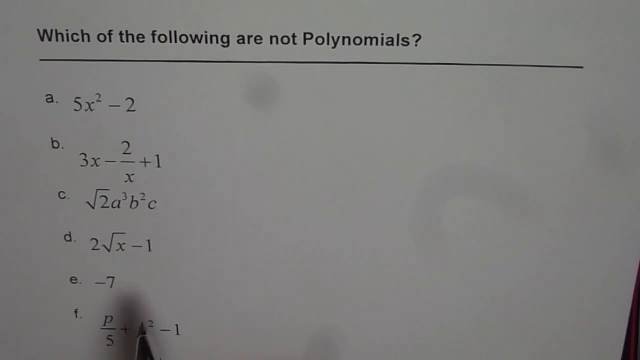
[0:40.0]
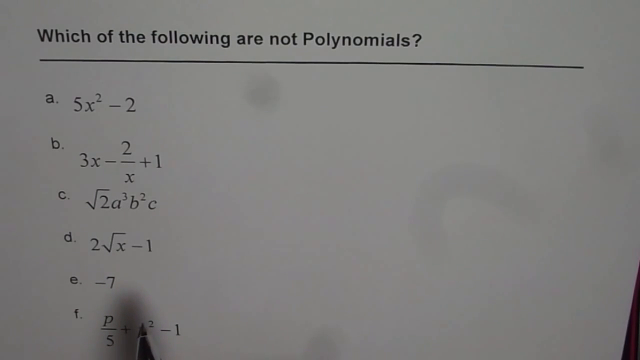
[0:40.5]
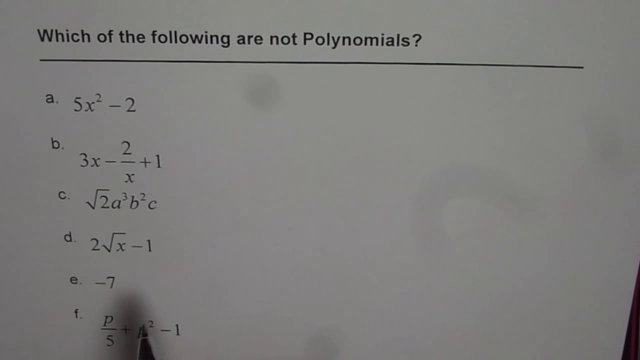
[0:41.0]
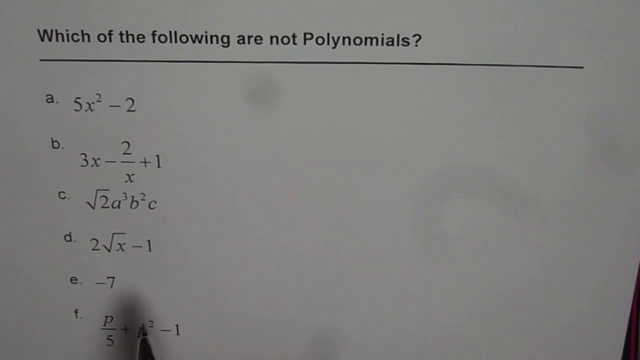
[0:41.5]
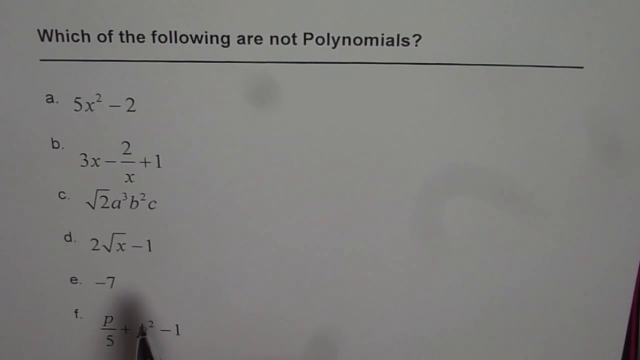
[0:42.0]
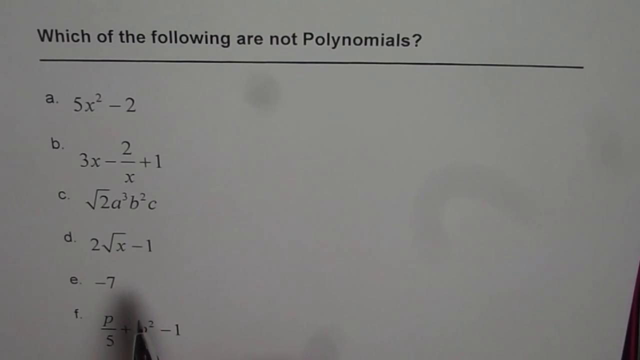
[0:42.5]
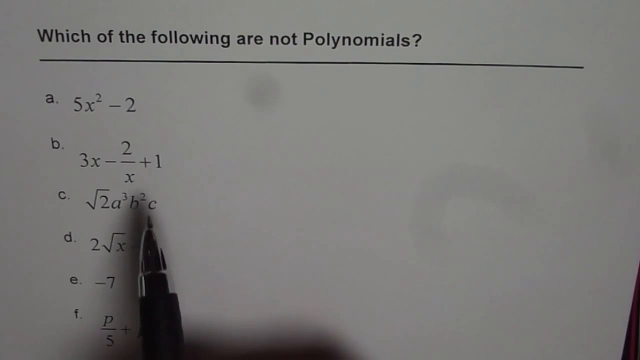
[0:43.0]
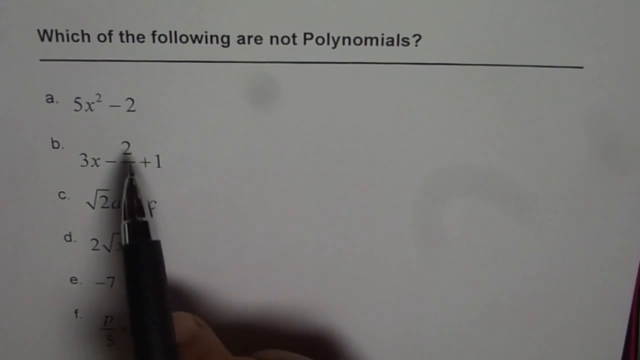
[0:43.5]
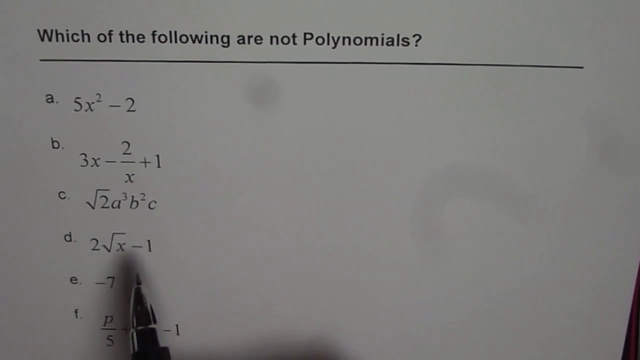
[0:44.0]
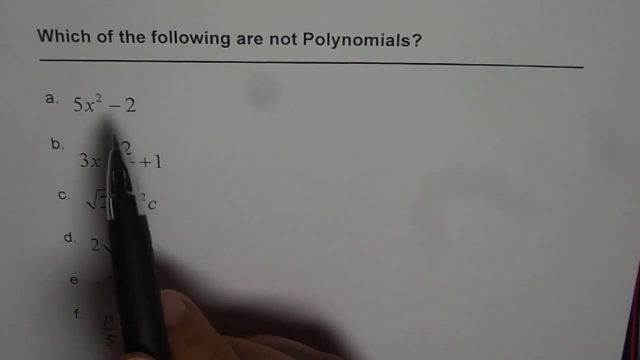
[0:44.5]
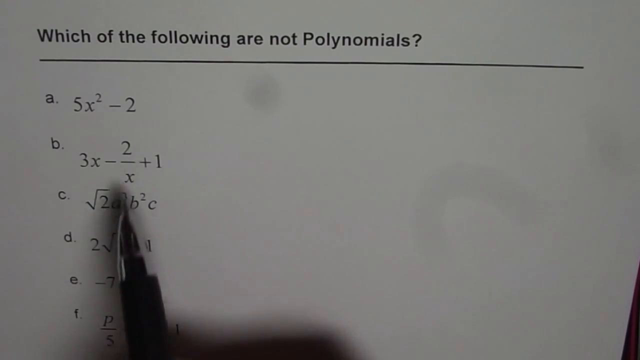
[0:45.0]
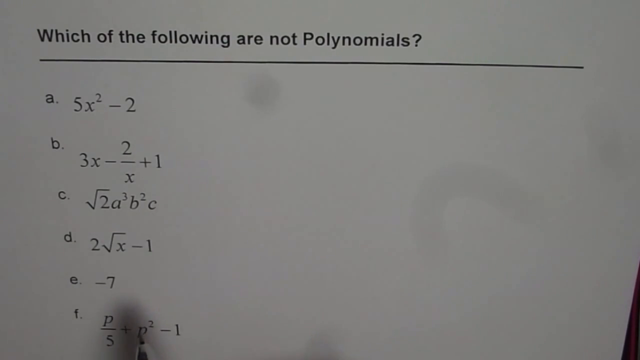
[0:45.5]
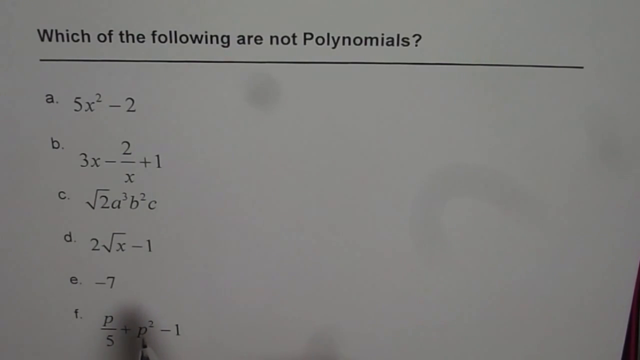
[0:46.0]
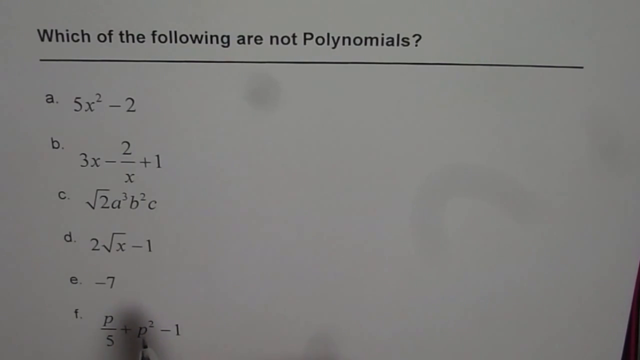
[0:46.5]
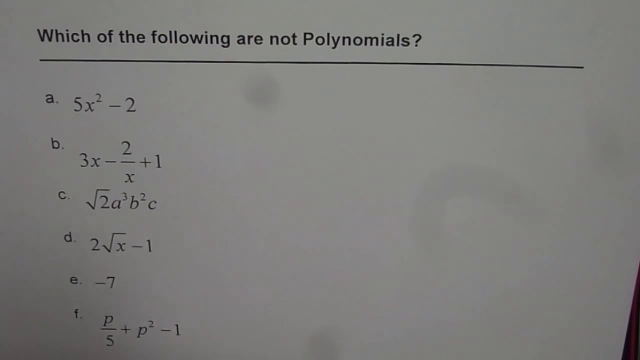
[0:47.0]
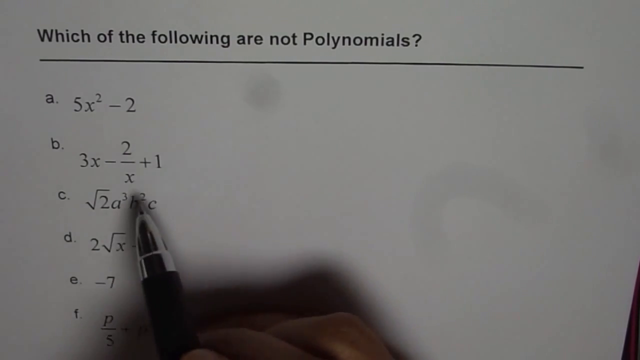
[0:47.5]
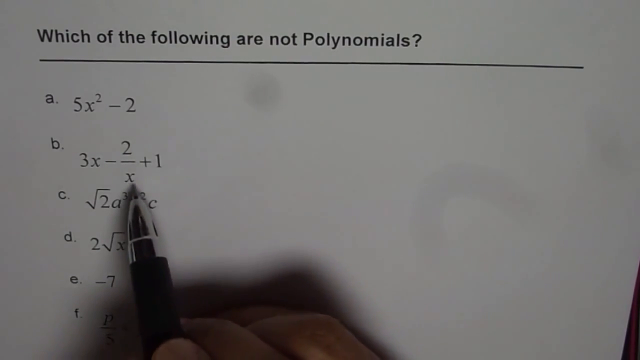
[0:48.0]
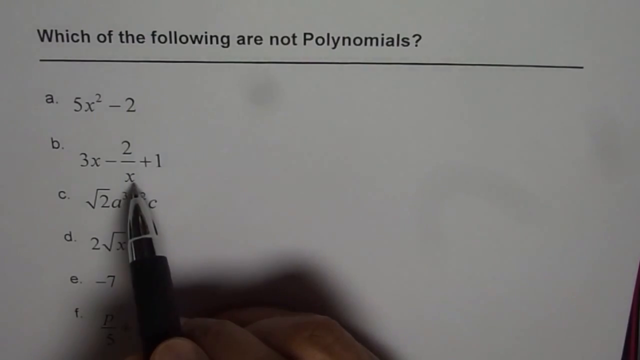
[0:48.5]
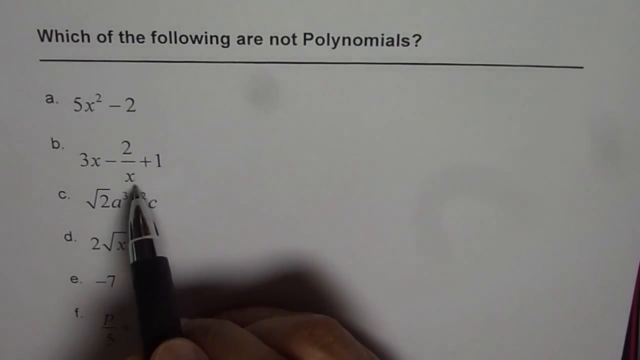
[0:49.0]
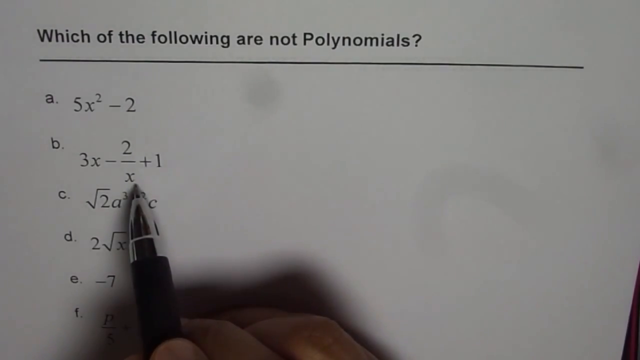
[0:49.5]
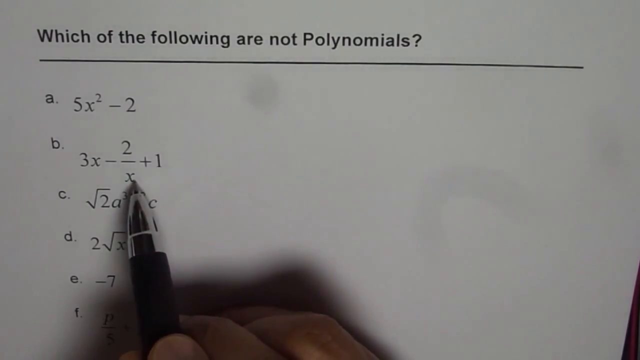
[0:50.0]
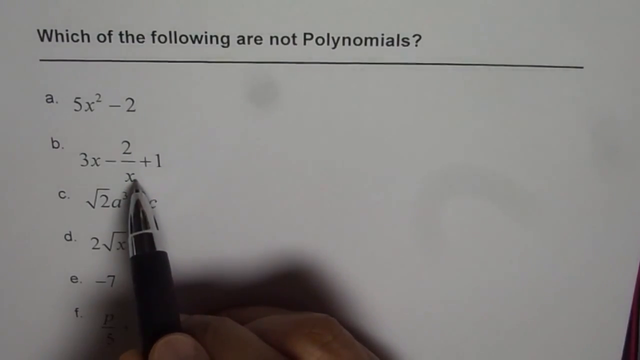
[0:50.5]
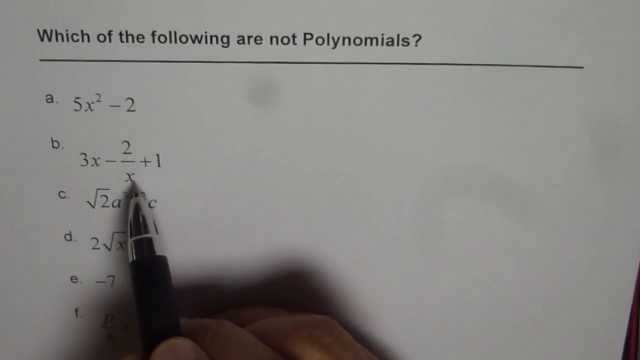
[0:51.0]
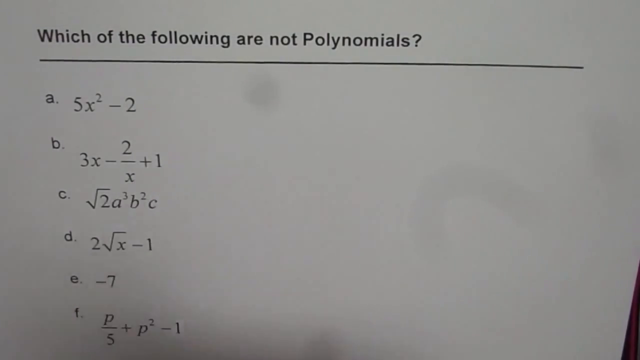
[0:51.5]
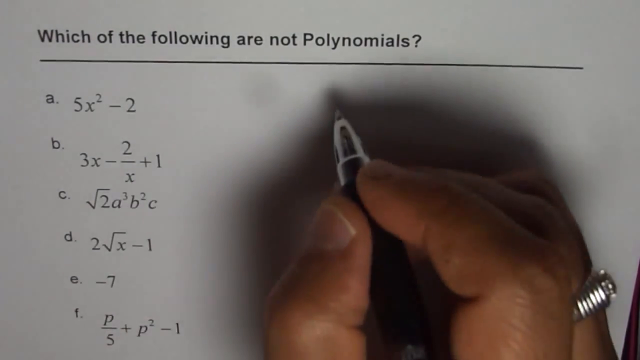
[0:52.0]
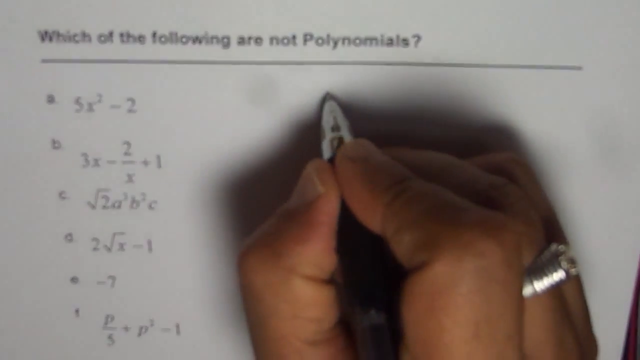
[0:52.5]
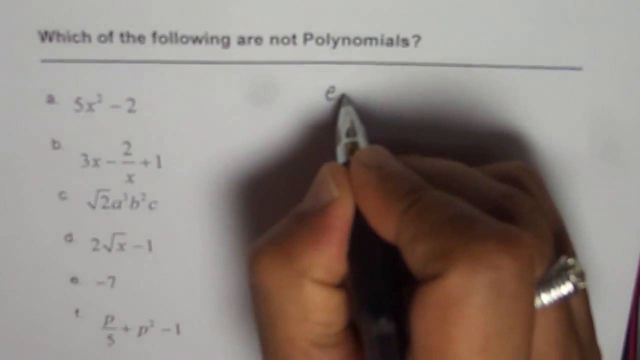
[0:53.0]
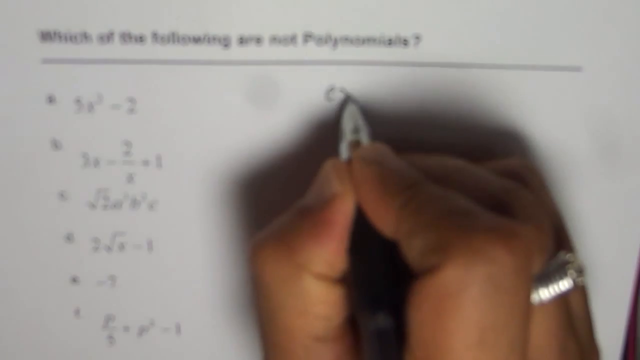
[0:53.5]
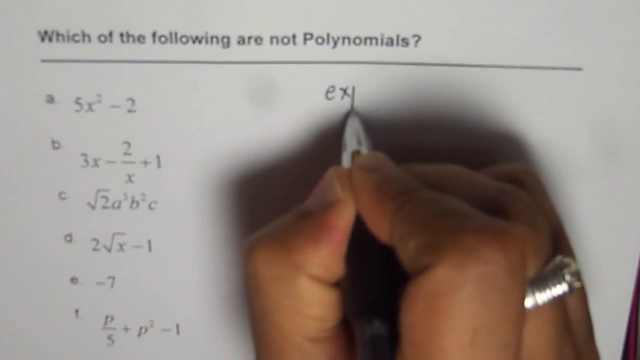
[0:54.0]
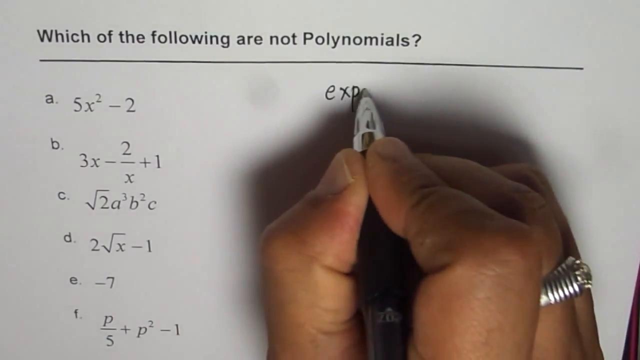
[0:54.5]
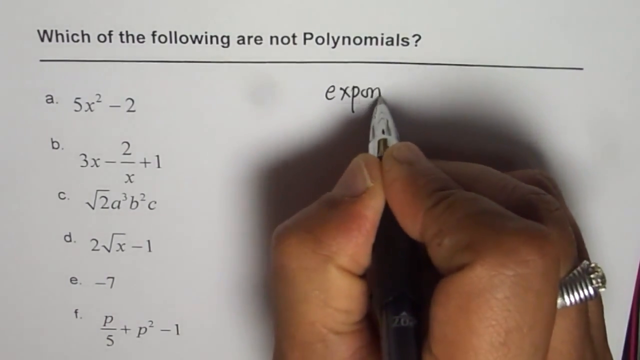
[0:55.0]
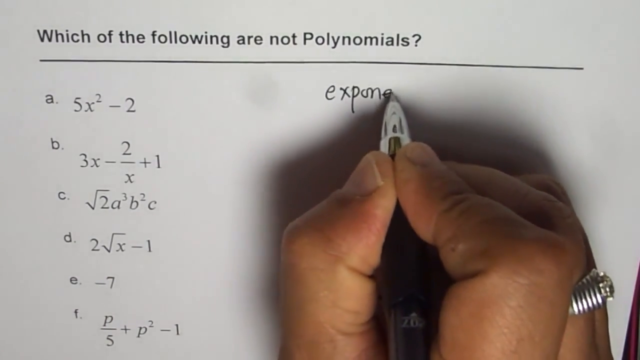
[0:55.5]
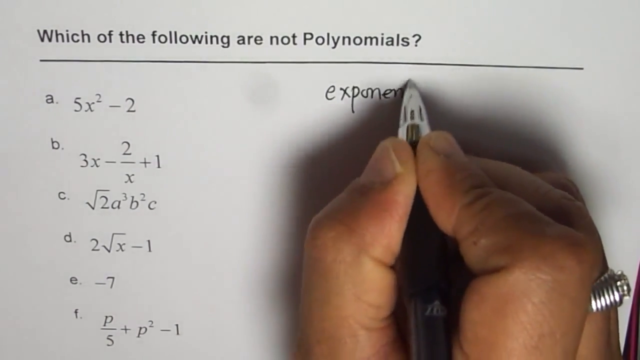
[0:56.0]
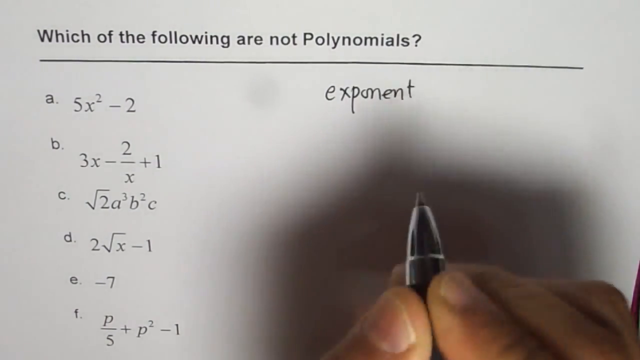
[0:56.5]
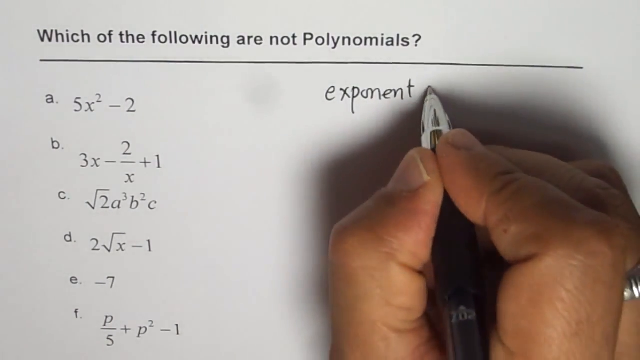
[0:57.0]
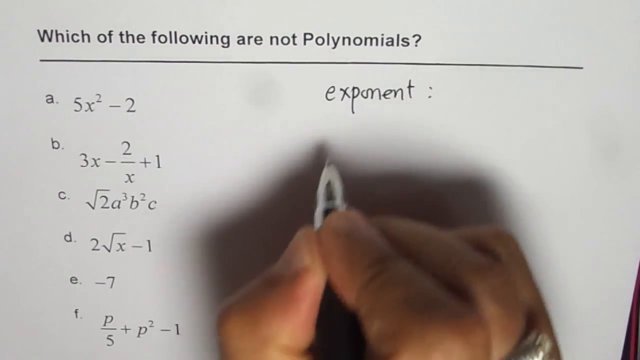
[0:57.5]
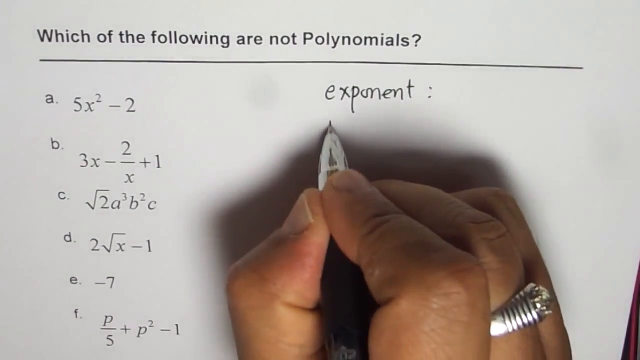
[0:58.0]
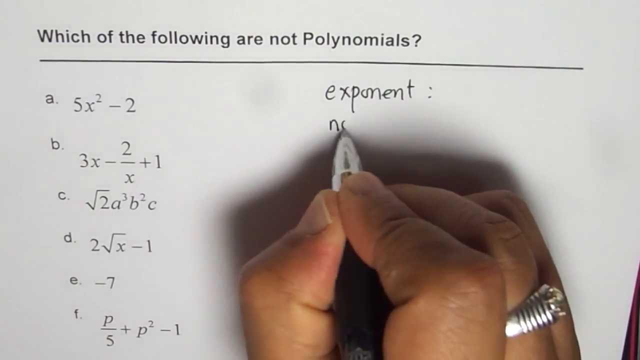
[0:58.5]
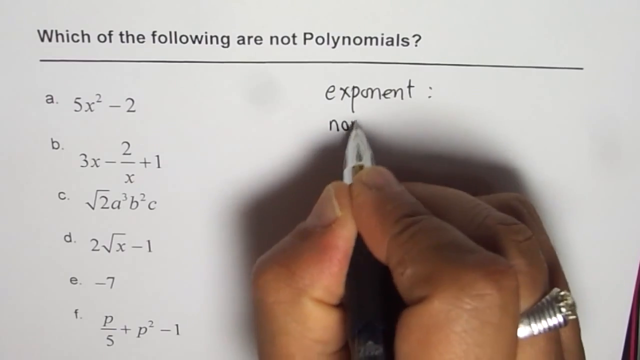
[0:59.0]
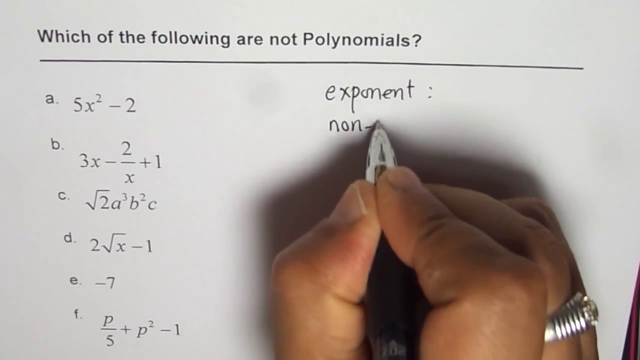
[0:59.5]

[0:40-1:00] The pen focuses on F, then moves up to B and points at the x, goes down to D and points at the x, and returns to F. The hand leaves off the bottom of the screen, then comes back and points at the second x in B, lingering there for a moment. A shadow is visible around the knuckles. The pen then moves over to the right, just right of center, and writes "exponent" in black ink, and below it writes "non-". The paper has a white background and lists the expressions: A, 5x to the second power minus 2; B, 3x minus 2 over x plus 1; C, the square root of 2a to the third power b to the second power c; D, 2 square root of x minus 1; E, just minus 7; and F, p over 5 plus p to the second power minus 1.